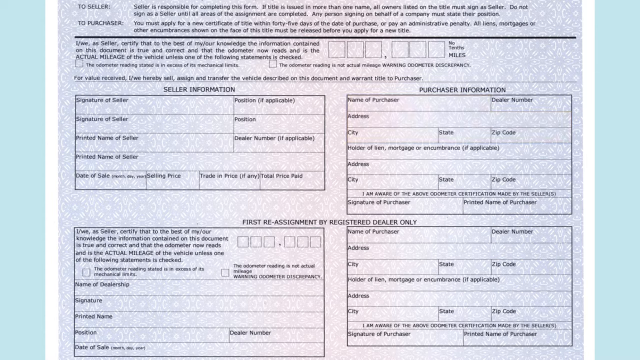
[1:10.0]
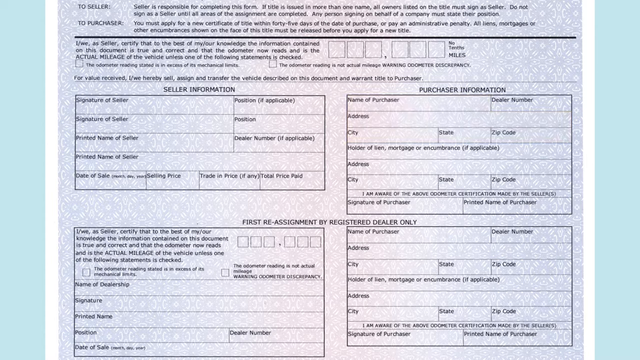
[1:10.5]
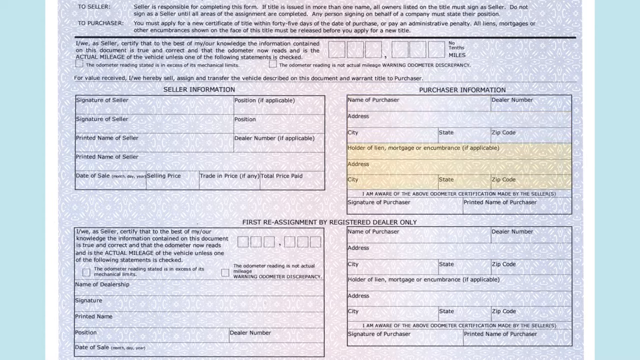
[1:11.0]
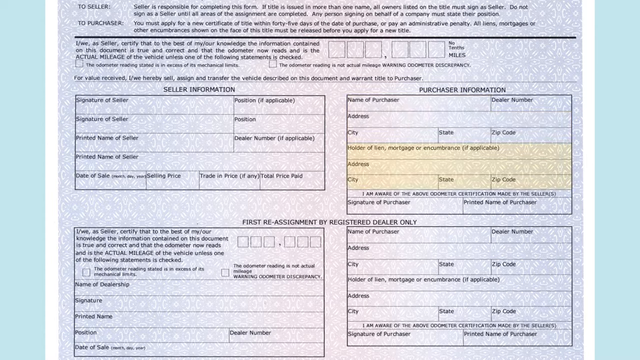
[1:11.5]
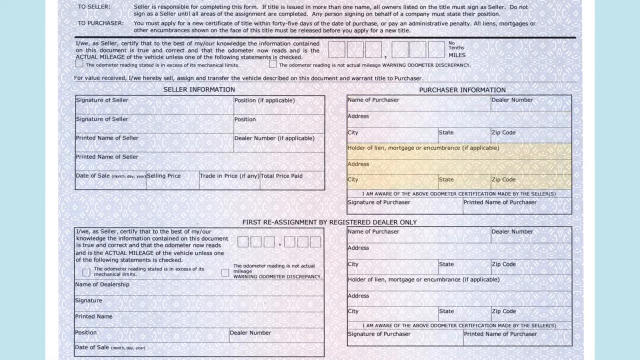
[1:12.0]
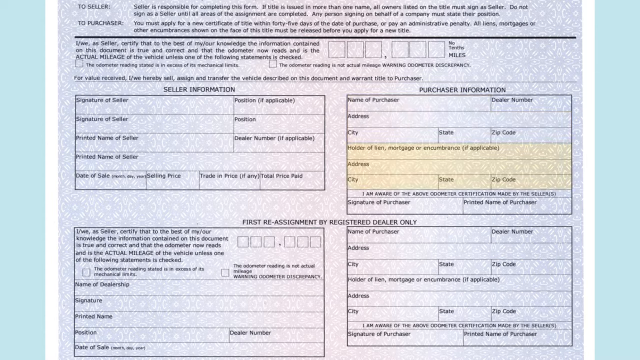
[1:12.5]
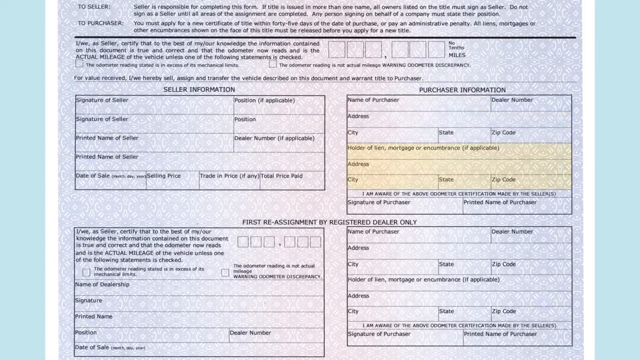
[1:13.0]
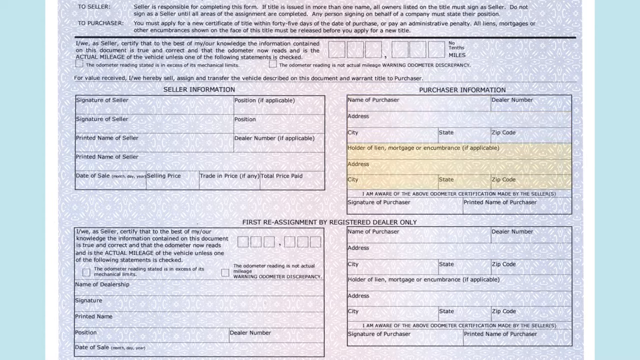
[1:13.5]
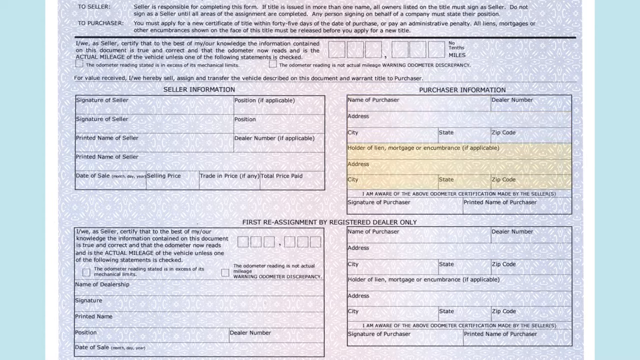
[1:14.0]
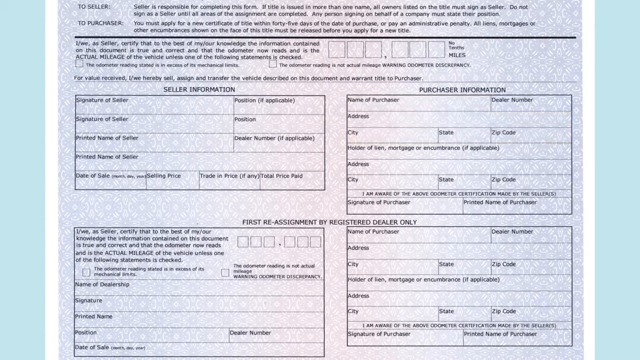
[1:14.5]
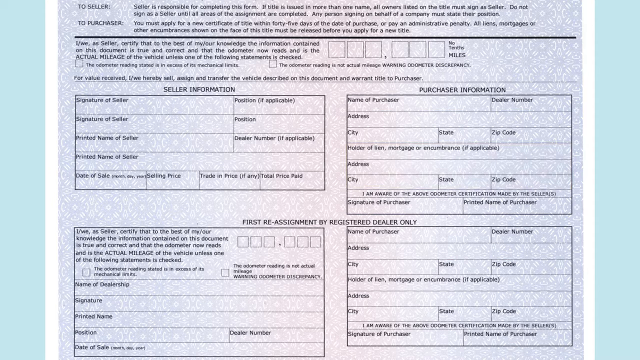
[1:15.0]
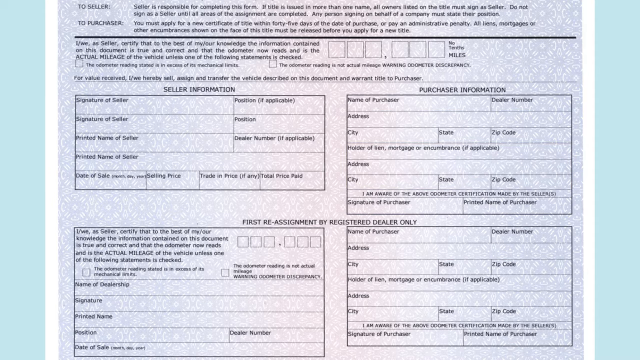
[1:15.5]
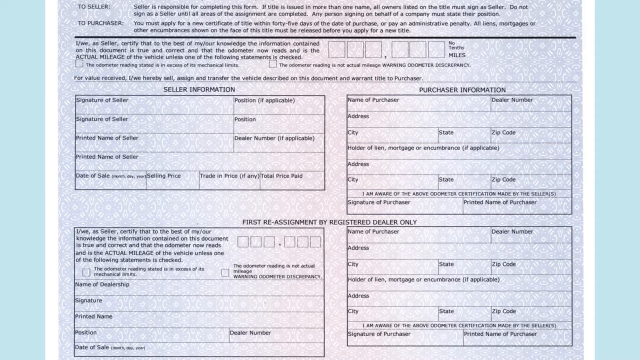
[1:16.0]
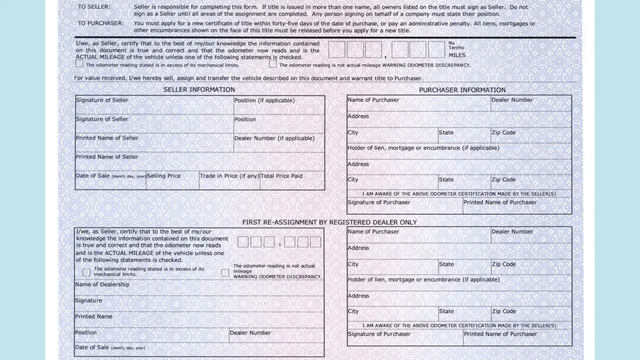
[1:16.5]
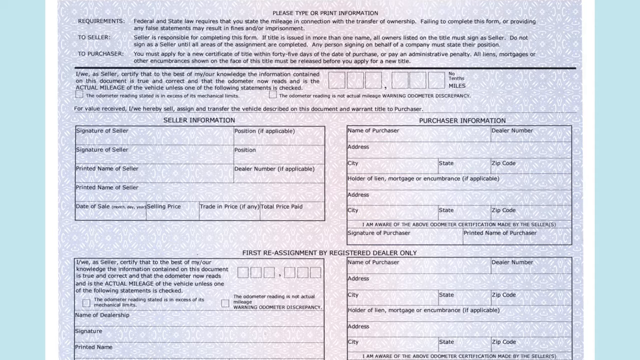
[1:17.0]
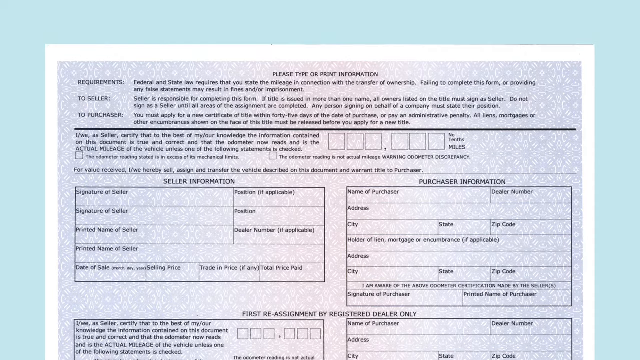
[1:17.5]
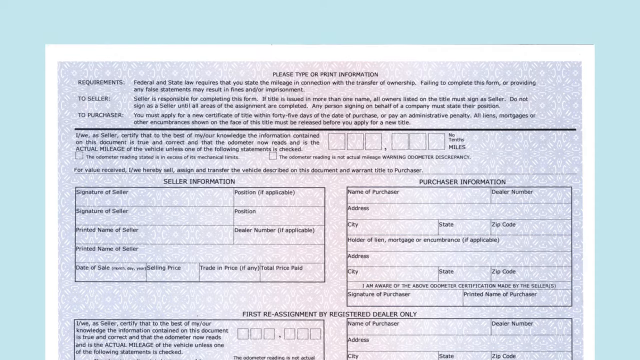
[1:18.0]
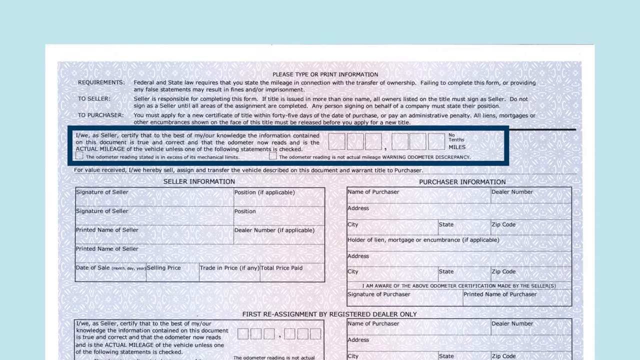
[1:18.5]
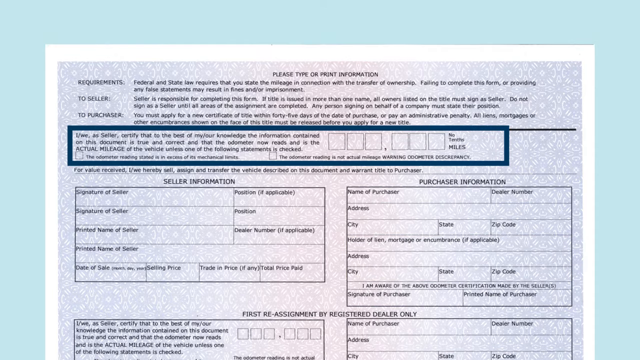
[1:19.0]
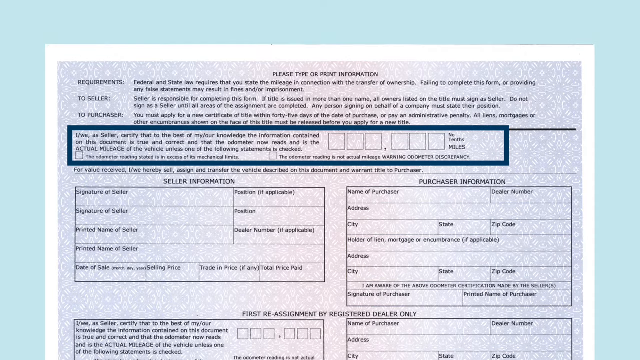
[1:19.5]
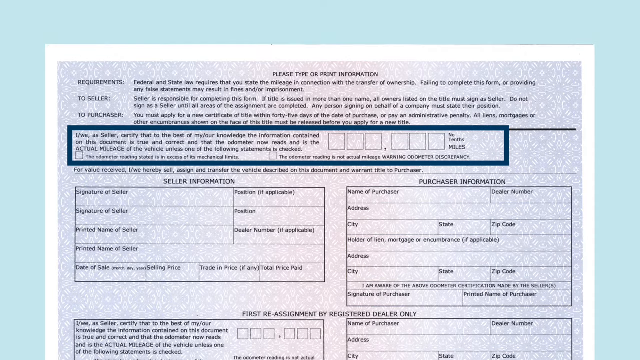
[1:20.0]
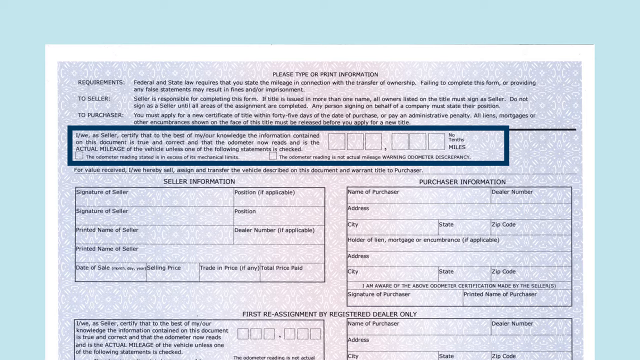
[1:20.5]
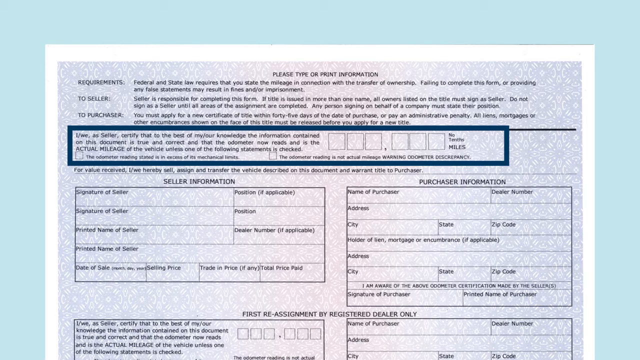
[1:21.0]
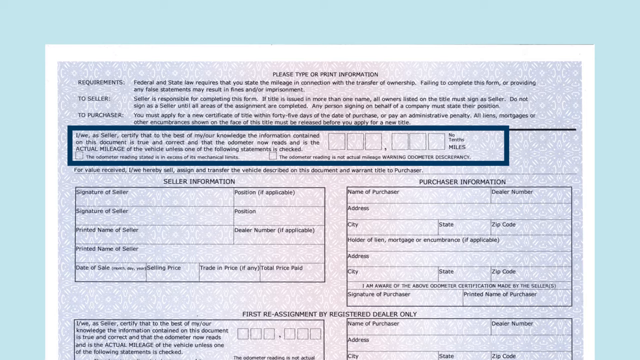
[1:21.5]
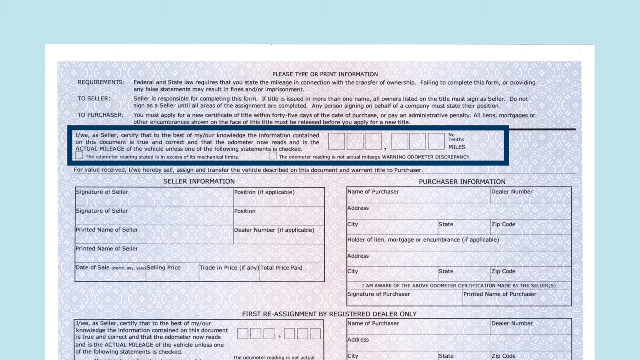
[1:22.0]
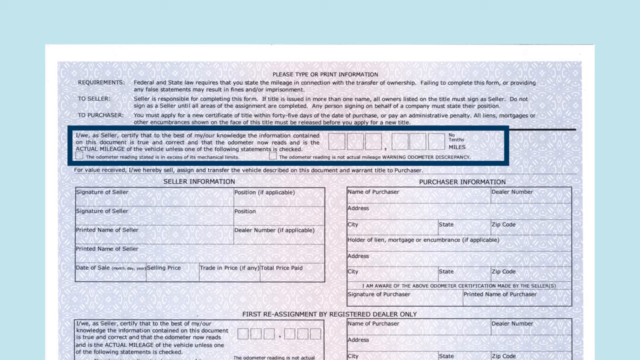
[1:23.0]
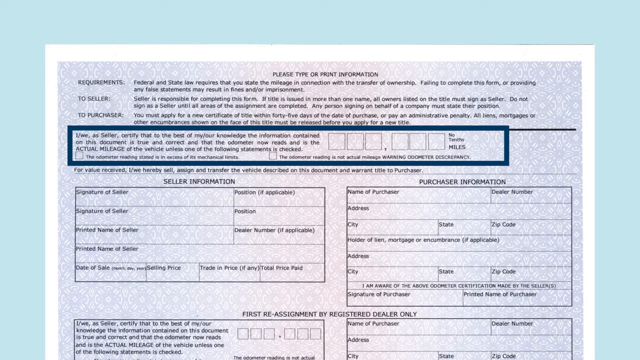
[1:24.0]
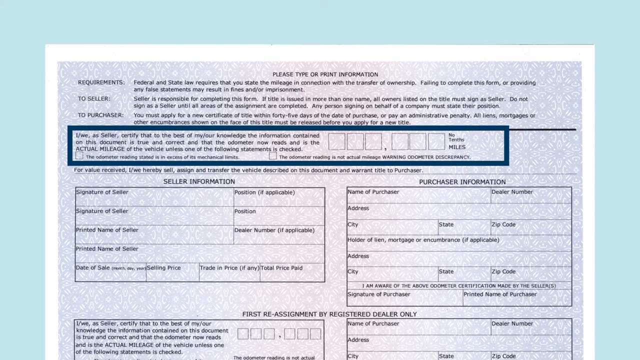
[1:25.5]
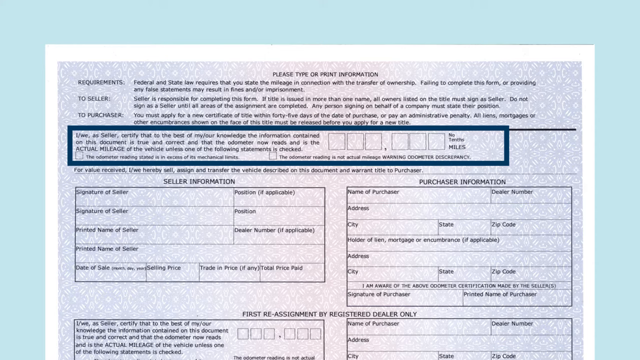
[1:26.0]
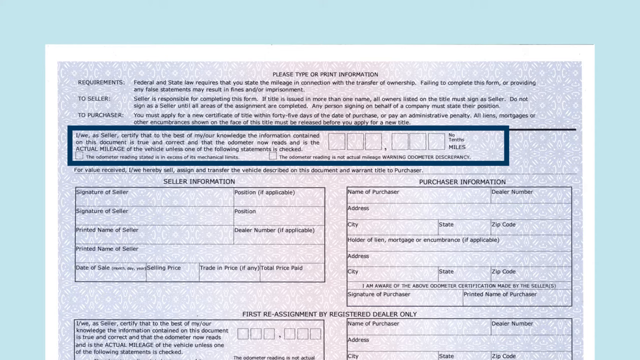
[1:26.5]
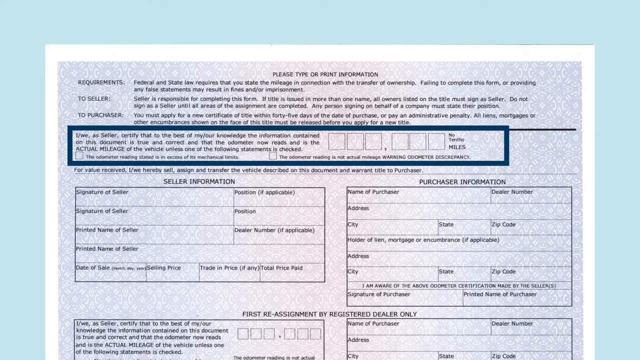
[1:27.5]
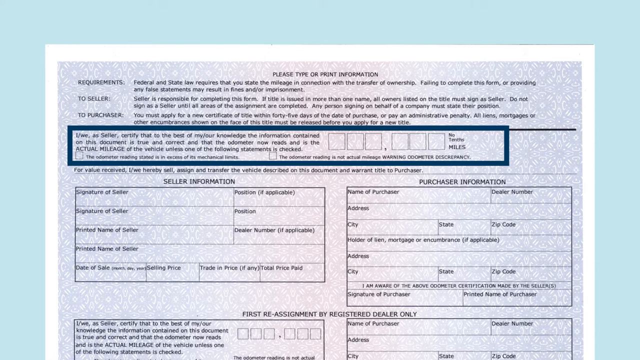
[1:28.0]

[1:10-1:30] The view is still on the back of the lien. The holder of lien or mortgage suddenly lights up, and the address, city, state, and zip are highlighted in yellow. The screen scrolls up, and a box appears around text reading "I, we, the seller certify that to the best of our knowledge, the information declared on this document is true and correct, and that the odometer now reads and is the actual mileage of the" vehicle, unless one of the following statements is checked; none of the statements are checked. The portion under purchaser information is then lit up again: the holder of lien, address, city, state, and zip code are all highlighted in yellow.